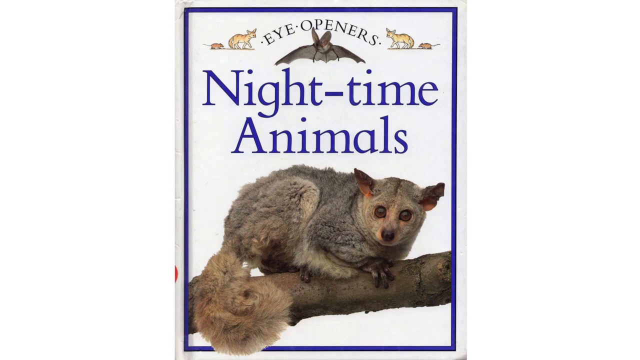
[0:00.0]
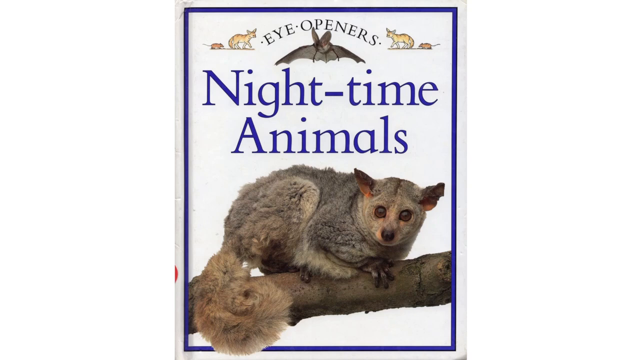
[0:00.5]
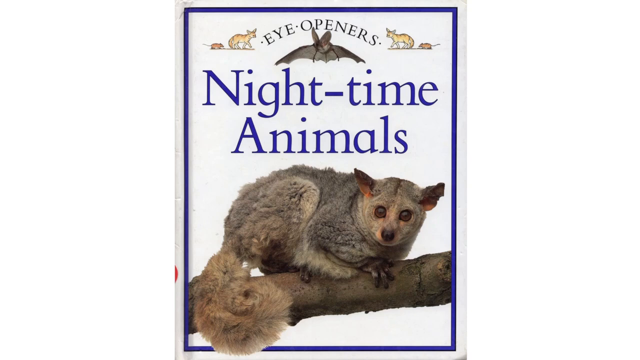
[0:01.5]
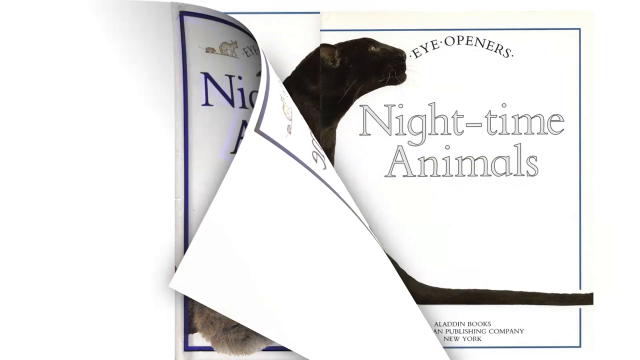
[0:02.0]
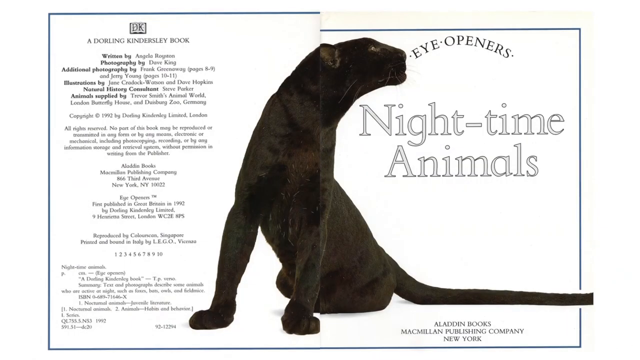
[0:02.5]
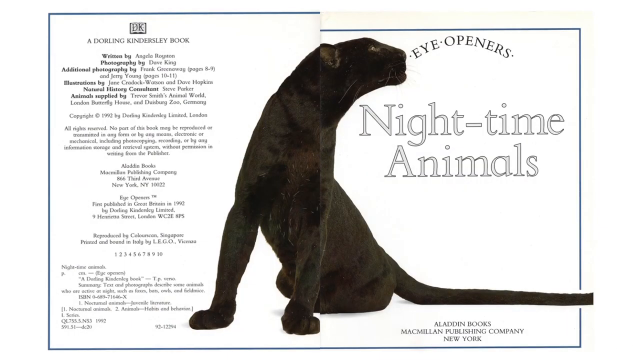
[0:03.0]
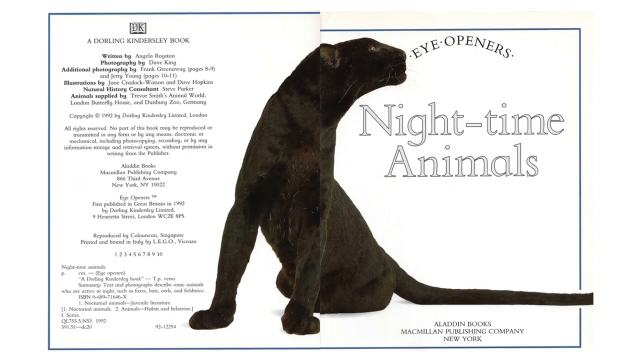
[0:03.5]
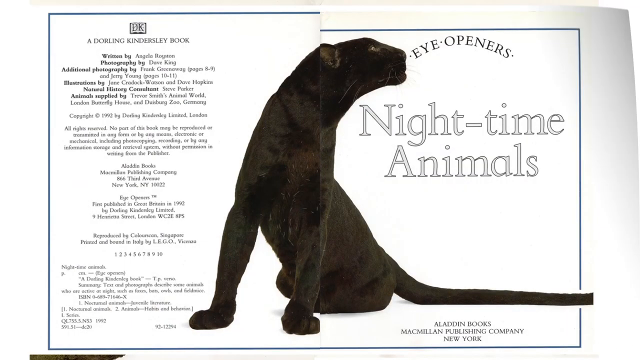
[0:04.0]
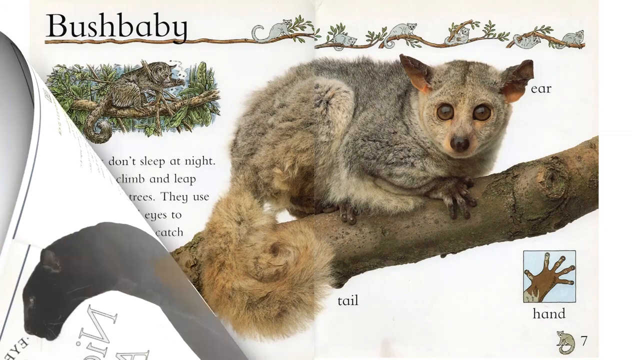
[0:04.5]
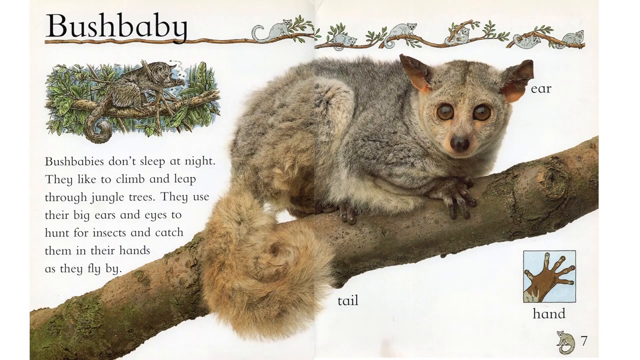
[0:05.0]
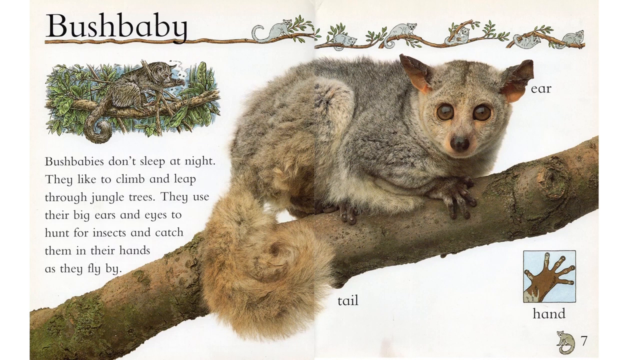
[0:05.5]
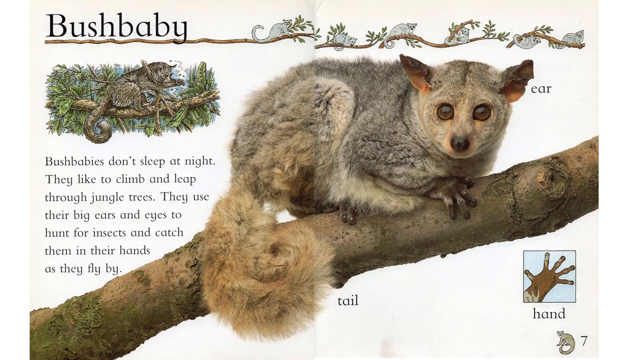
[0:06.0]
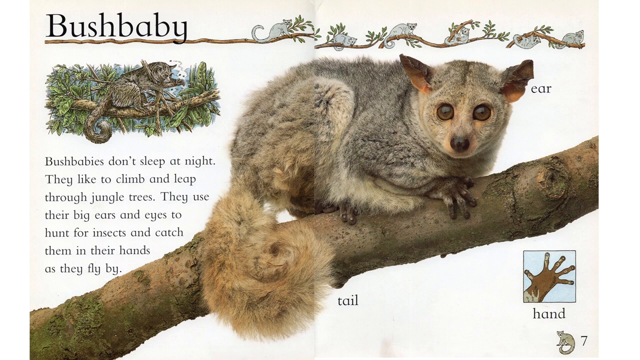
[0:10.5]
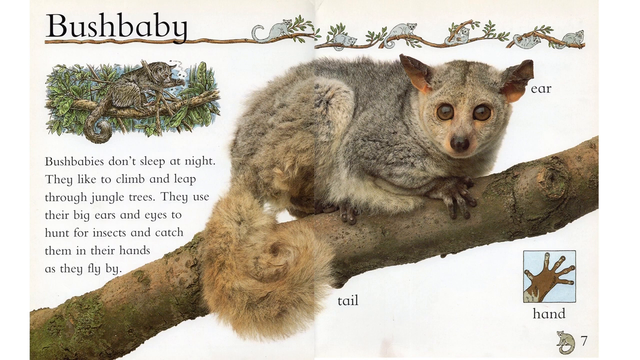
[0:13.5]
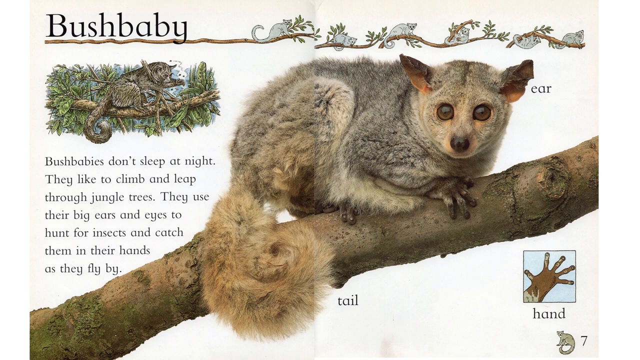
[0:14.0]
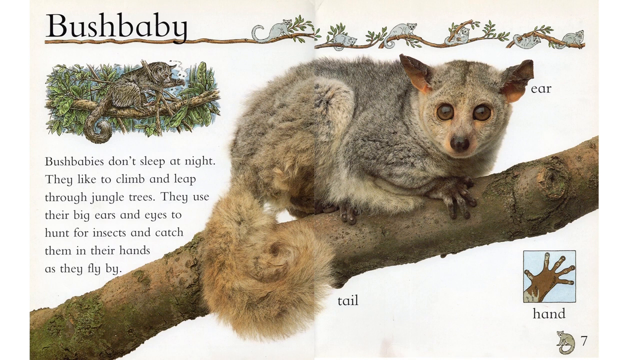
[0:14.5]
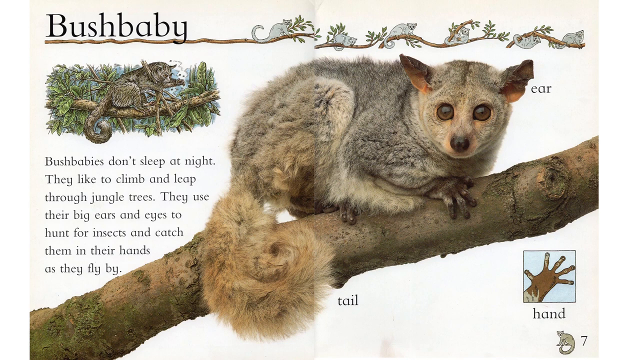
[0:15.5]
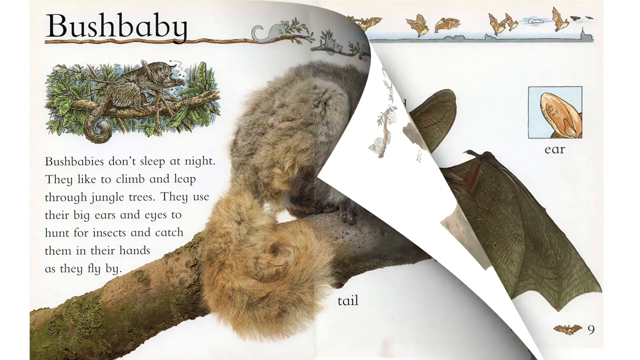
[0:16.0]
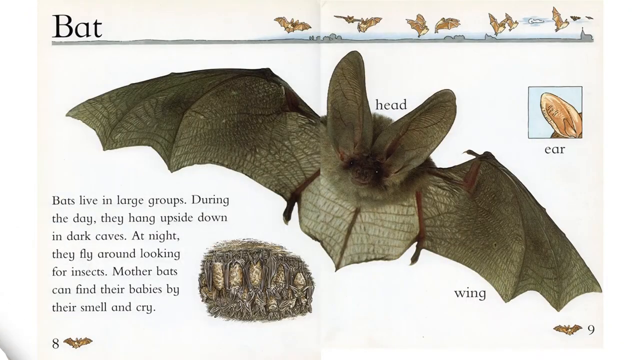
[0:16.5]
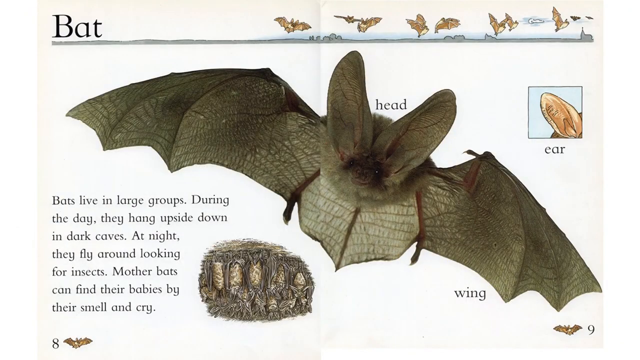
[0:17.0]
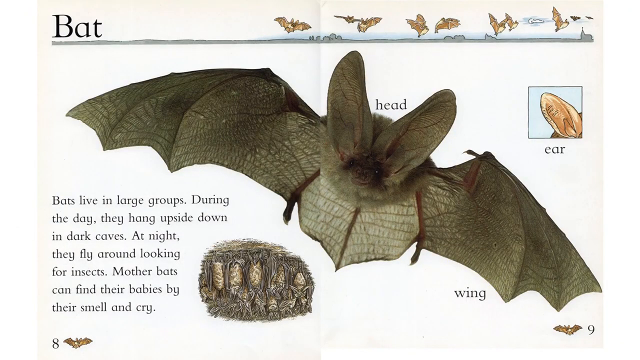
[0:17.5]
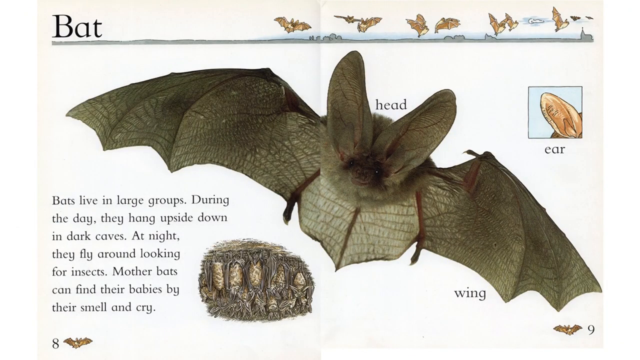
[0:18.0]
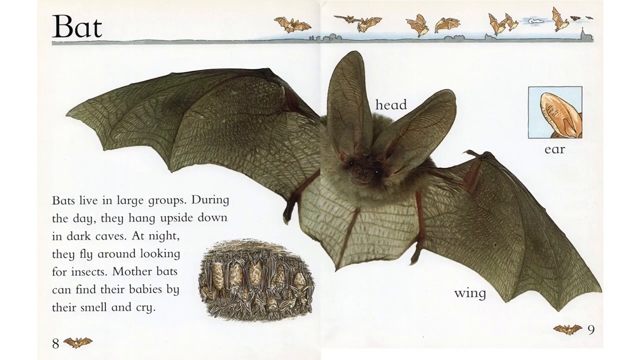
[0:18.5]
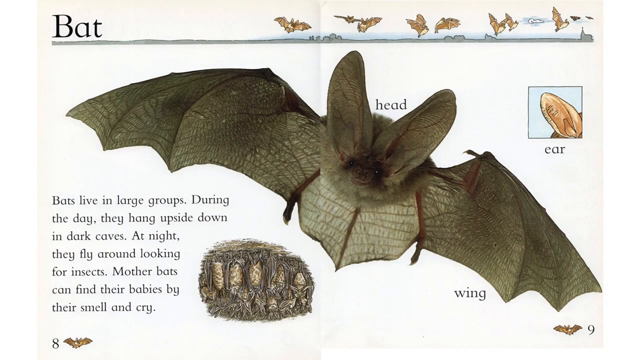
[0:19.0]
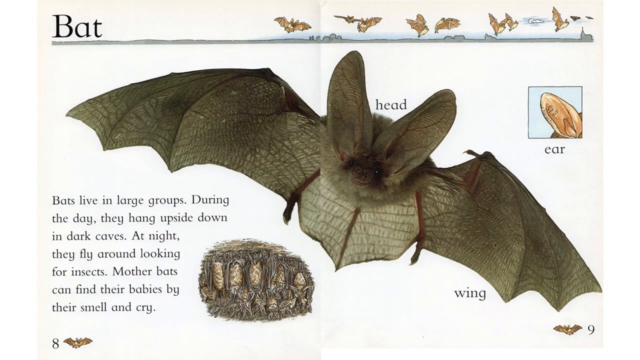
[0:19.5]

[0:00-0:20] A book about nighttime animals is shown, with two animals on its cover. Its pages show different types of animals along with their descriptions and explanations. The first page shows a big black cat, and the text on the other side cannot be read. The next page shows bush babies, with a drawing of a bush baby and more bush babies on a tree. The text reads "Bush babies don't sleep at night."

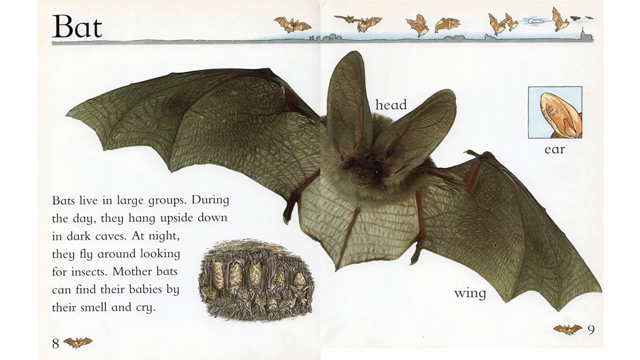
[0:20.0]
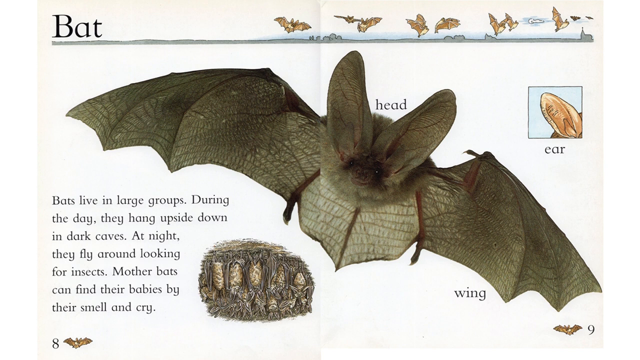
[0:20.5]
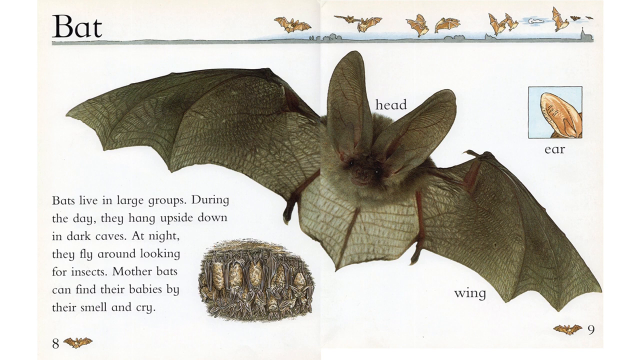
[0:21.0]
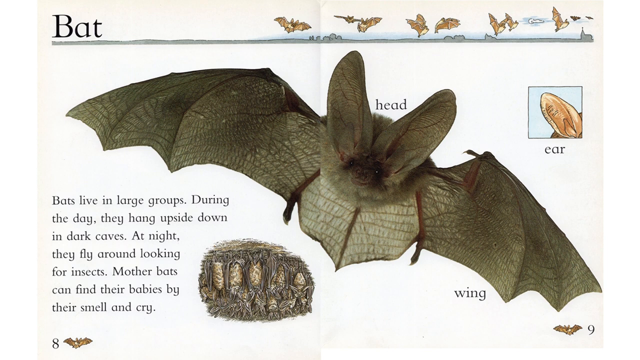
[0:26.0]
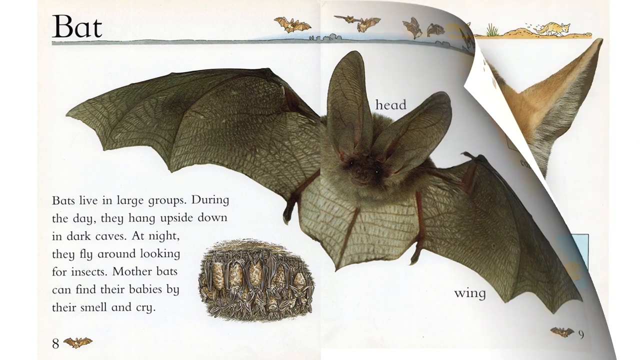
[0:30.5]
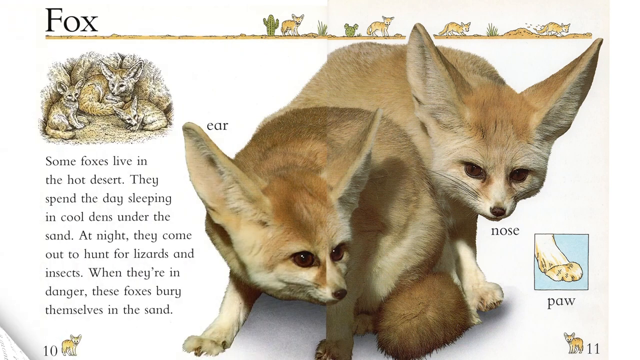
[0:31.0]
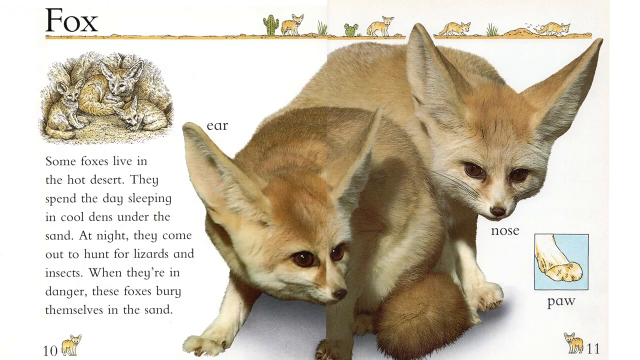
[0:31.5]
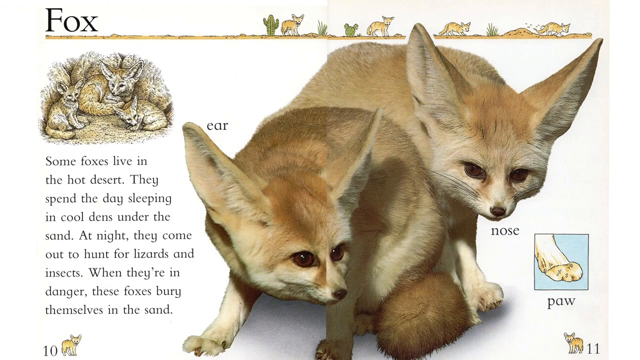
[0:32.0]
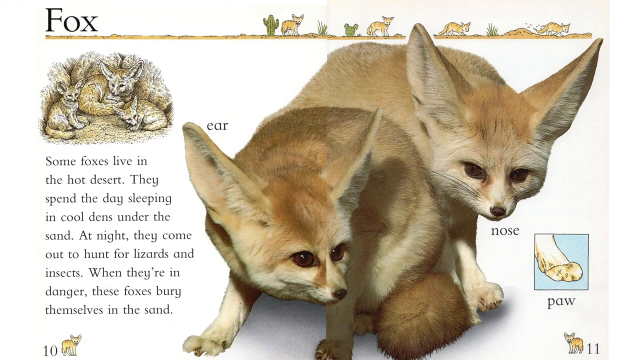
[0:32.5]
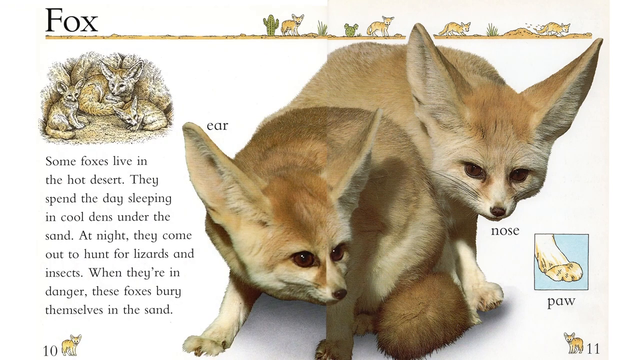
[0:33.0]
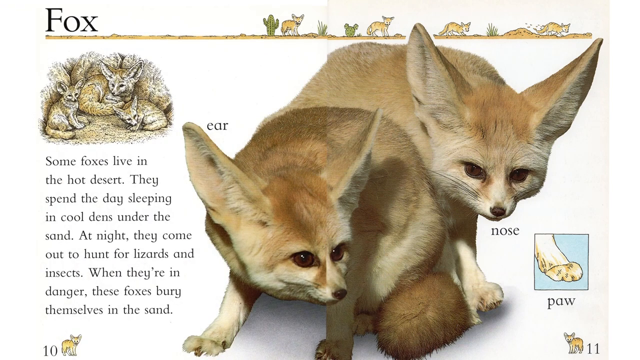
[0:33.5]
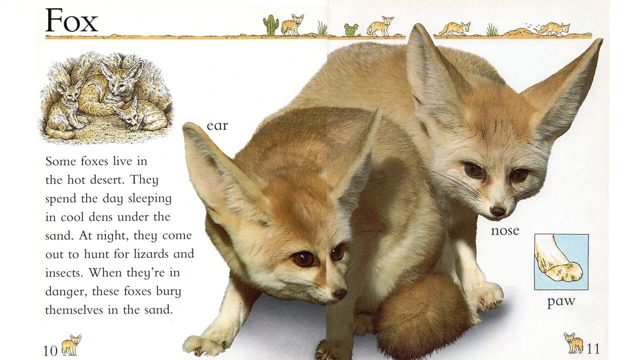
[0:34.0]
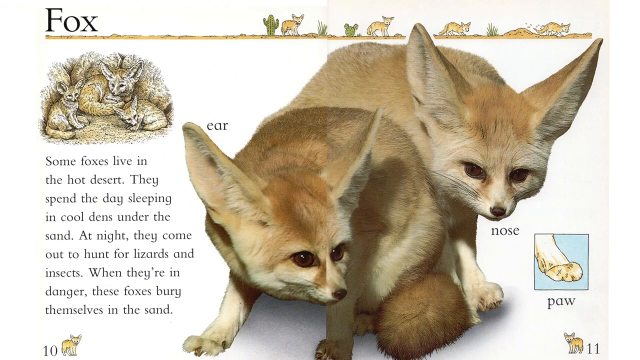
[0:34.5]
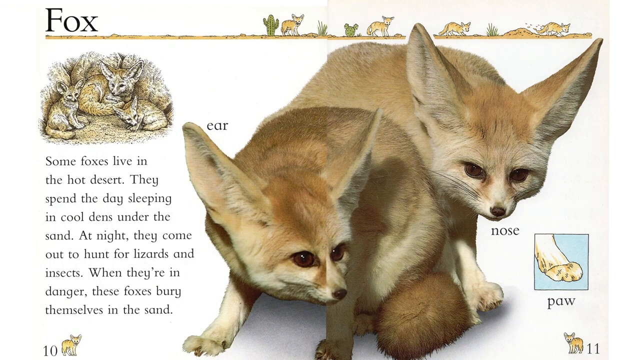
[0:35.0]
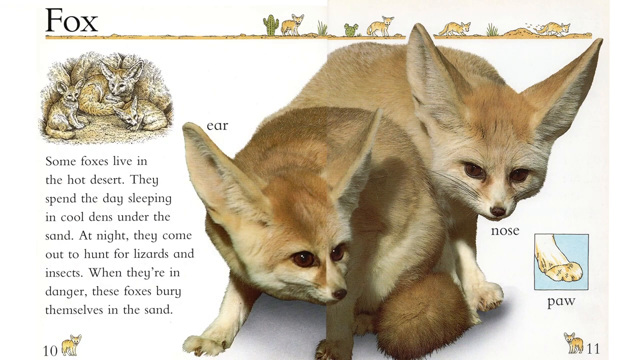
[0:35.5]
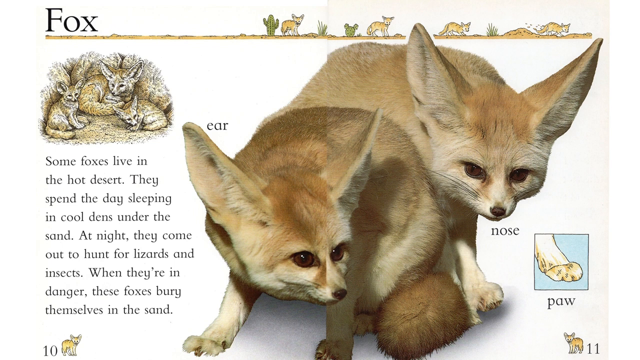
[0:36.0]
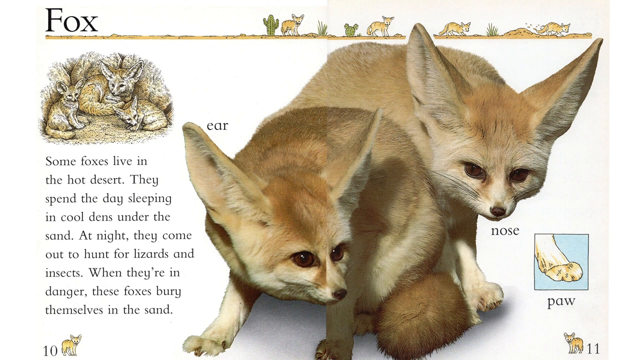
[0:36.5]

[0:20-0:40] The page on bats shows a few bats flying at the top. The text reads "Bats live in large groups. During the day they hang upside down in dark place. At night they fly around looking for insects. Mother bats can find their babies by their smell and cry." The next animal is a fox, drawn at the top of the page. The text reads "Some foxes live in hot desert." and "At night they come out and hunt for lizards and insects."